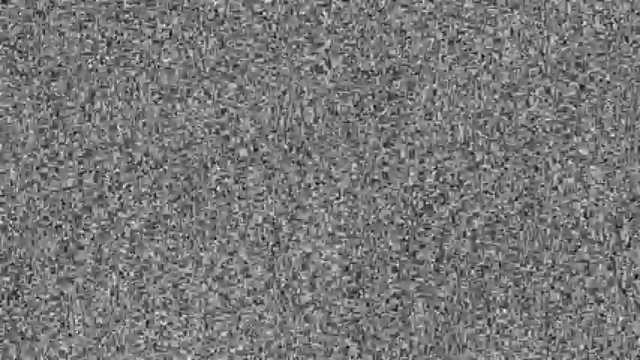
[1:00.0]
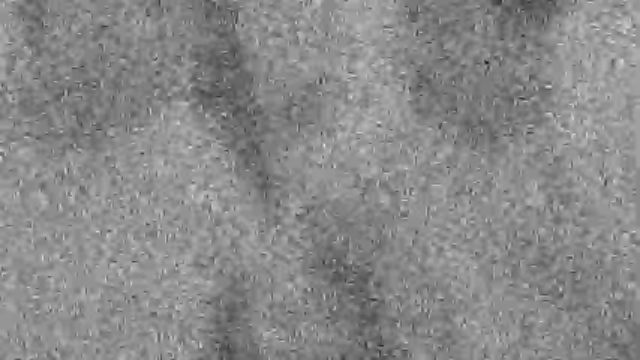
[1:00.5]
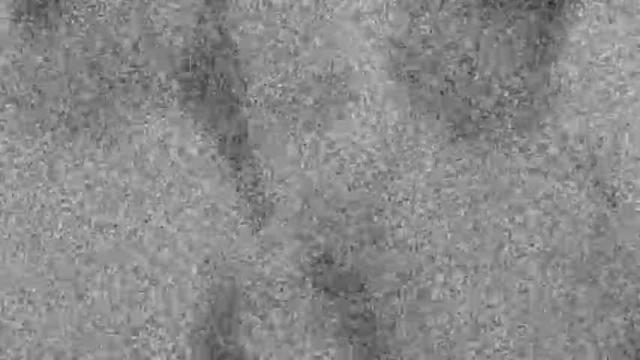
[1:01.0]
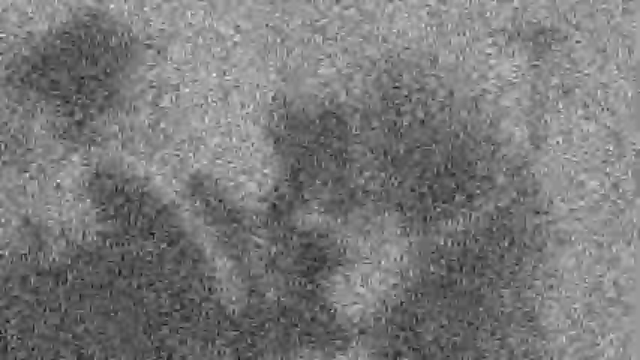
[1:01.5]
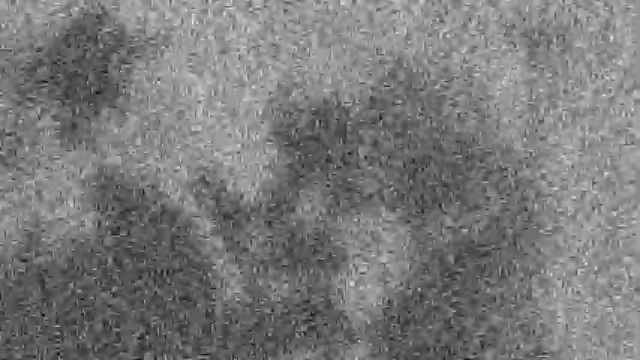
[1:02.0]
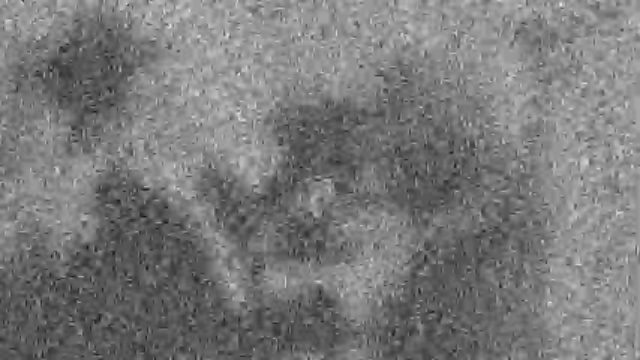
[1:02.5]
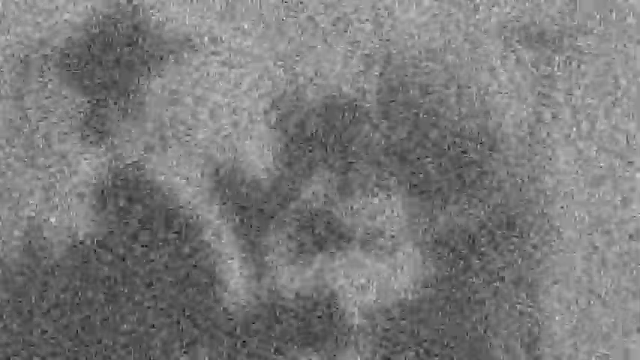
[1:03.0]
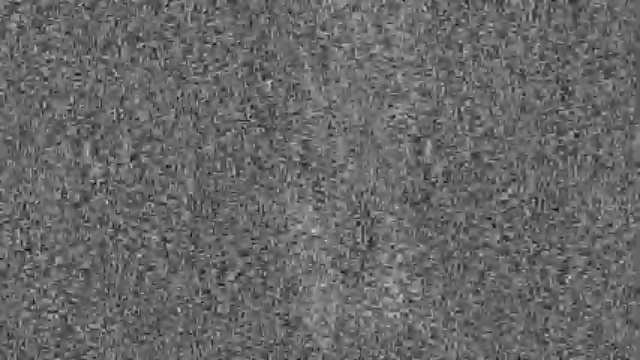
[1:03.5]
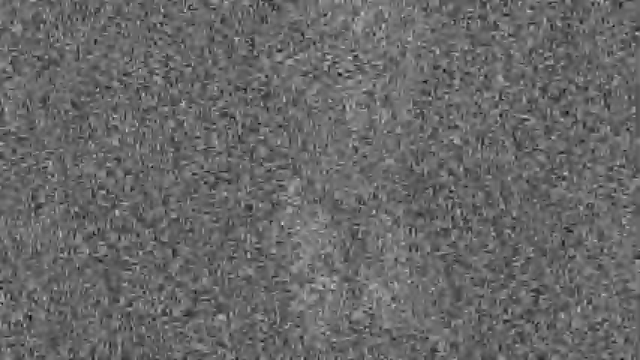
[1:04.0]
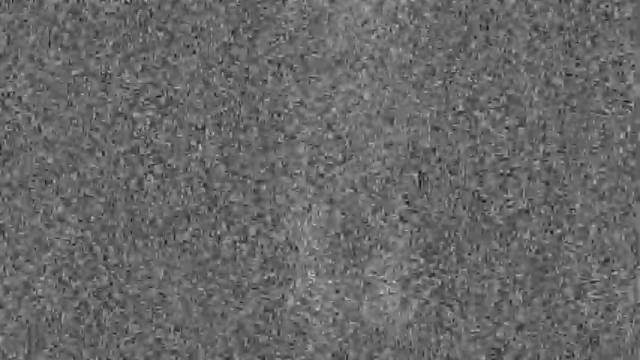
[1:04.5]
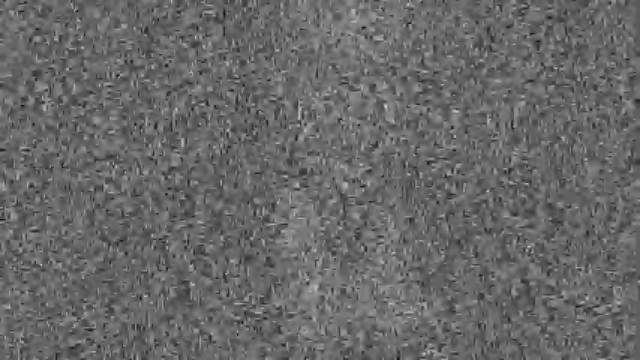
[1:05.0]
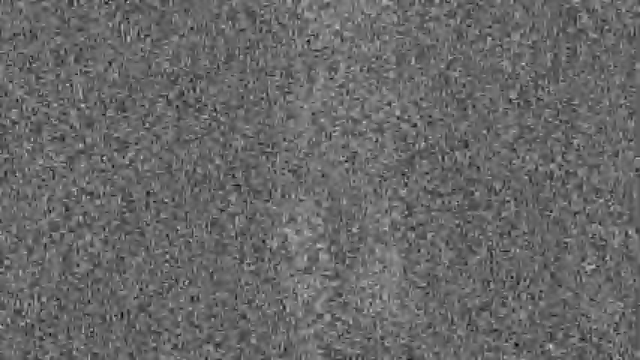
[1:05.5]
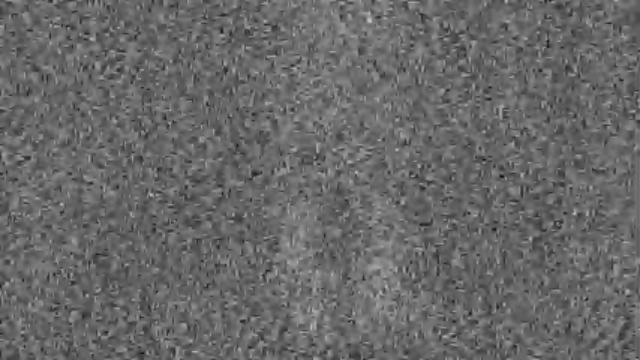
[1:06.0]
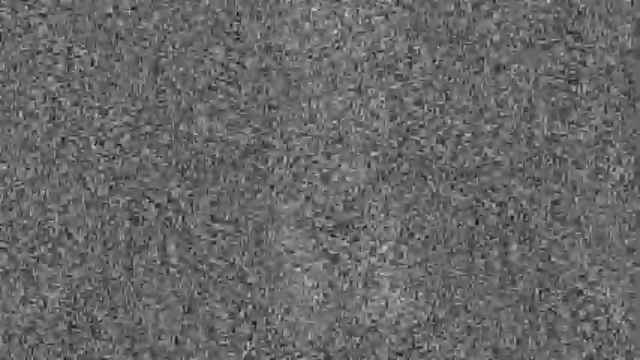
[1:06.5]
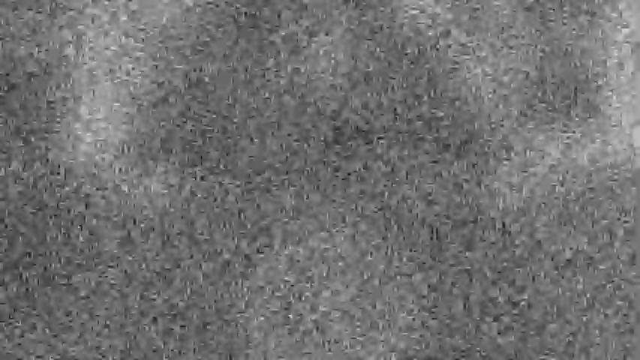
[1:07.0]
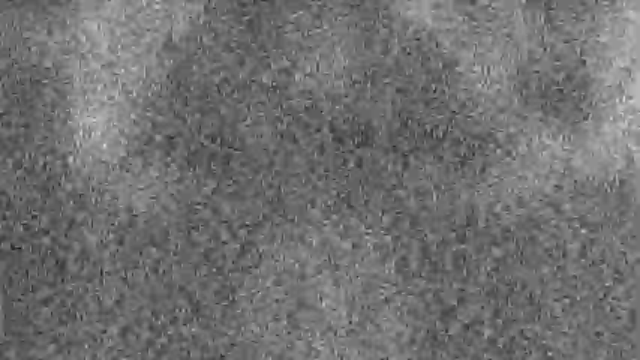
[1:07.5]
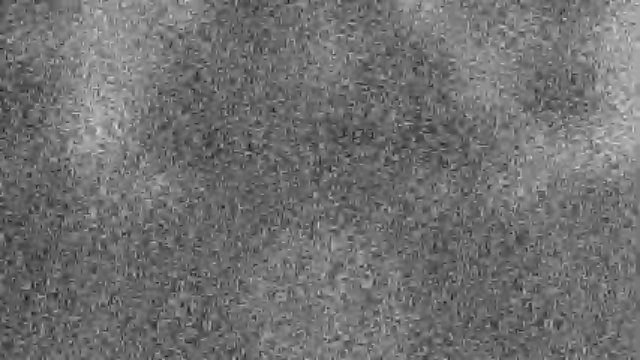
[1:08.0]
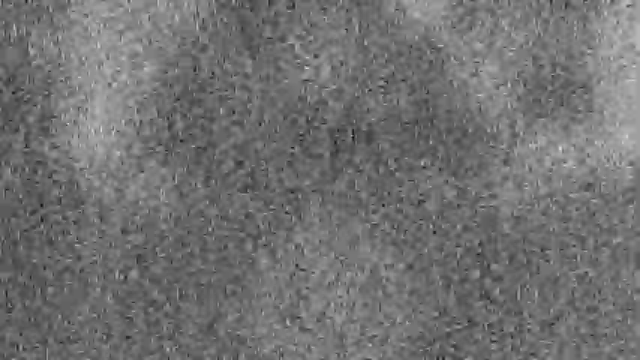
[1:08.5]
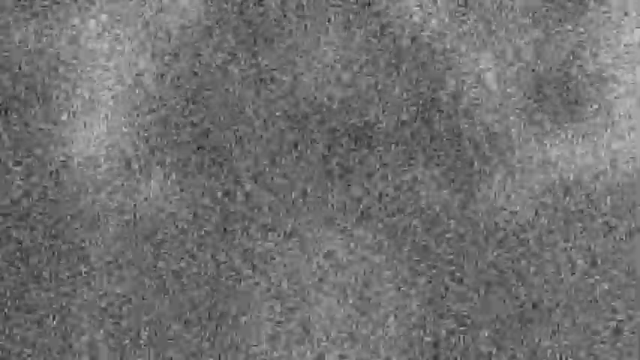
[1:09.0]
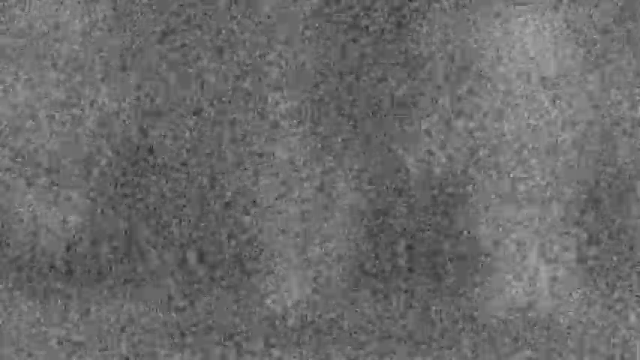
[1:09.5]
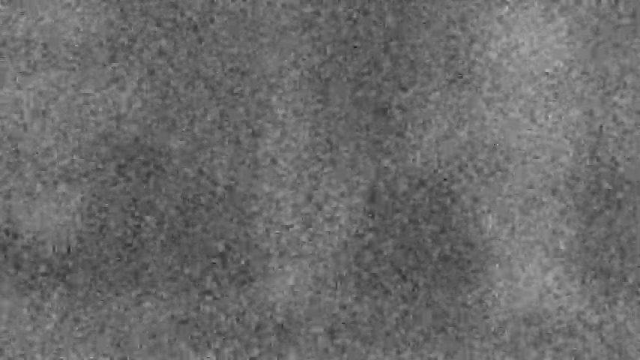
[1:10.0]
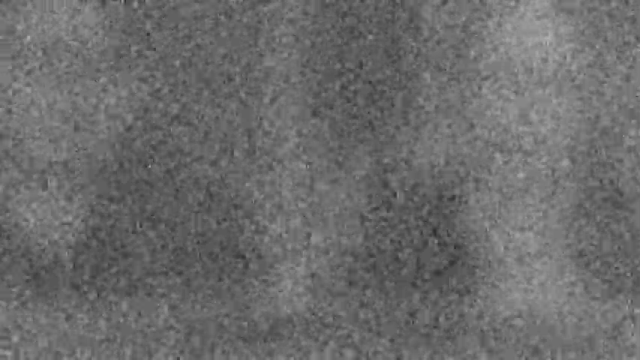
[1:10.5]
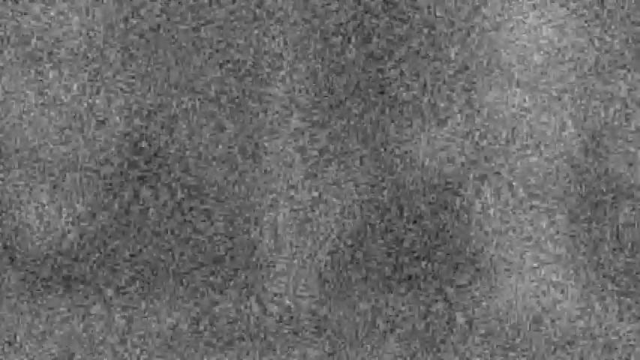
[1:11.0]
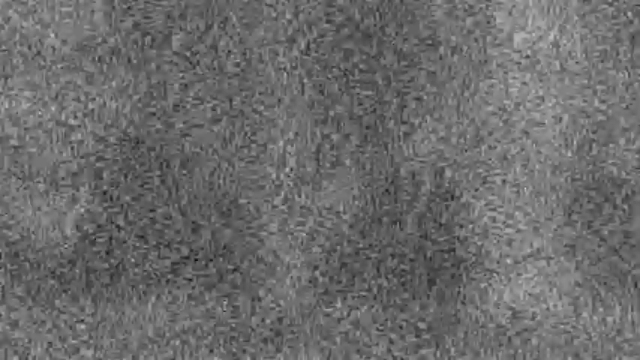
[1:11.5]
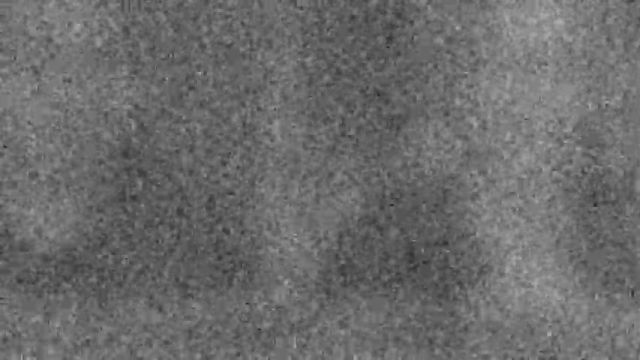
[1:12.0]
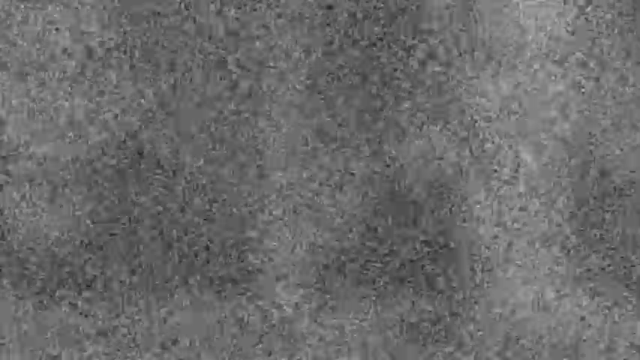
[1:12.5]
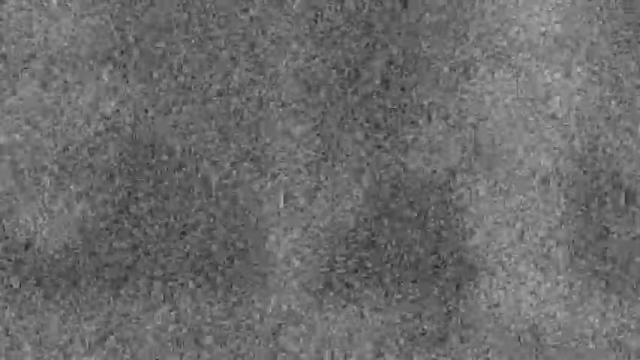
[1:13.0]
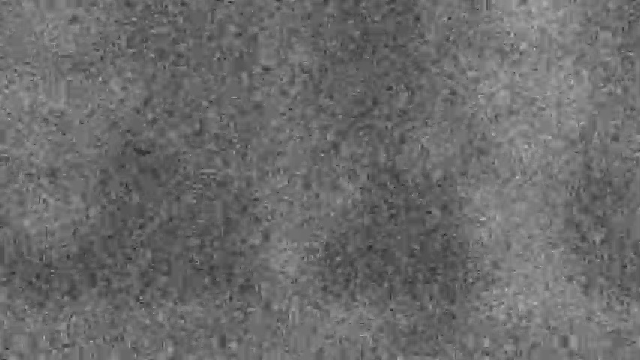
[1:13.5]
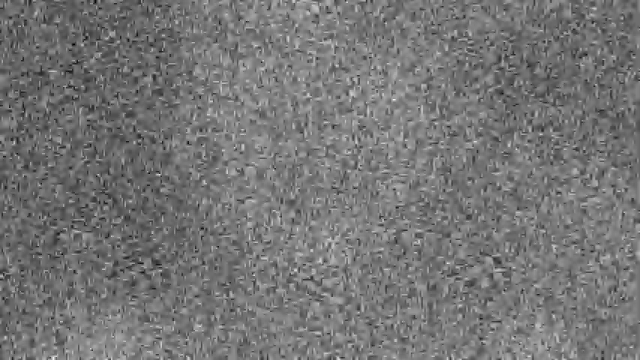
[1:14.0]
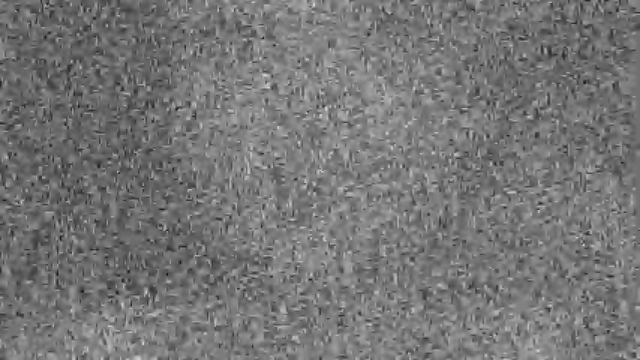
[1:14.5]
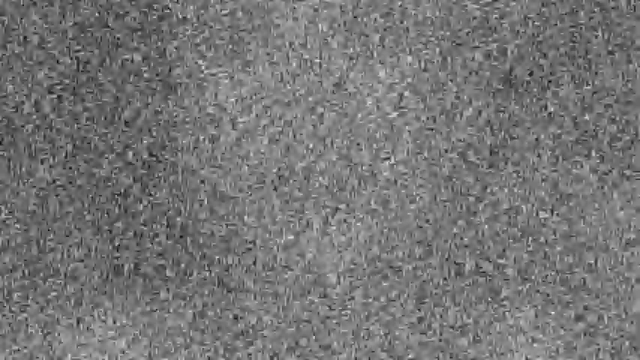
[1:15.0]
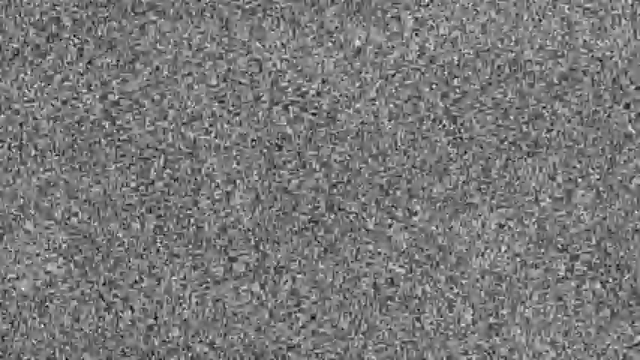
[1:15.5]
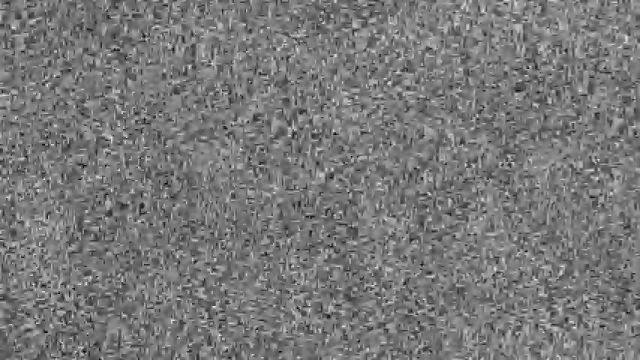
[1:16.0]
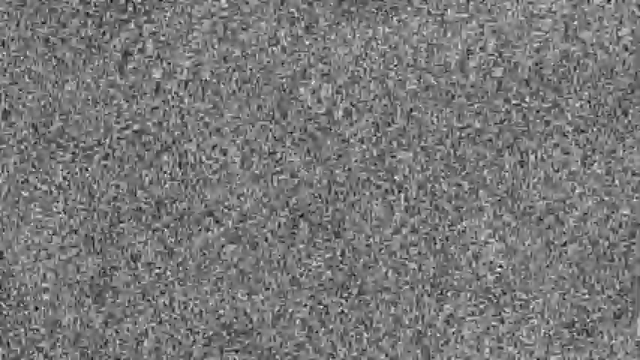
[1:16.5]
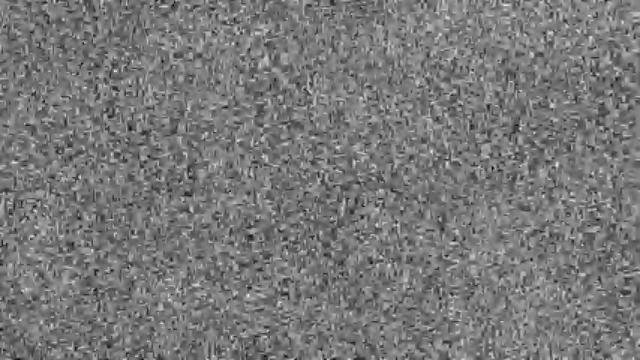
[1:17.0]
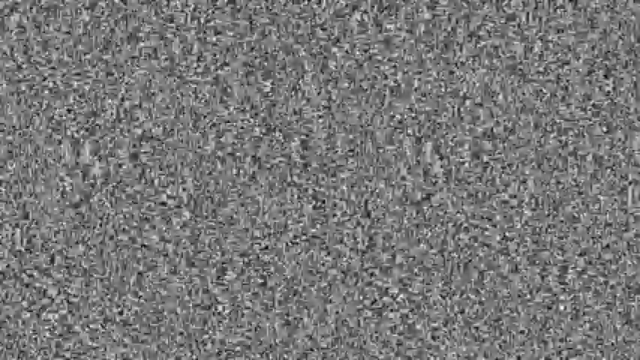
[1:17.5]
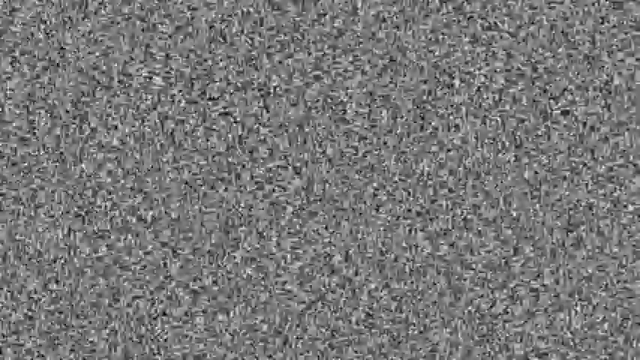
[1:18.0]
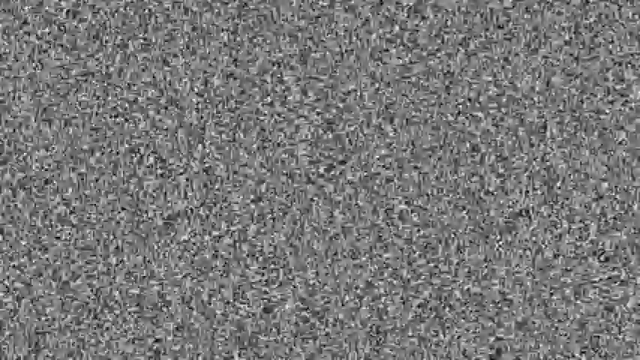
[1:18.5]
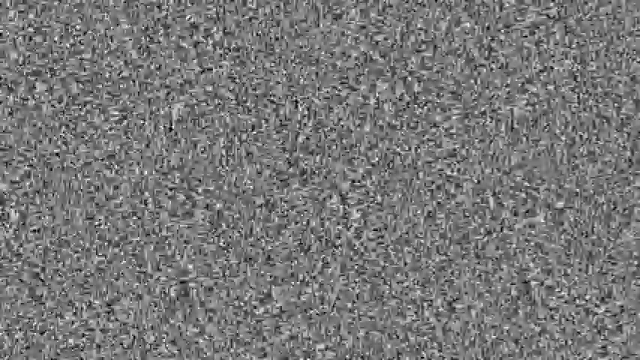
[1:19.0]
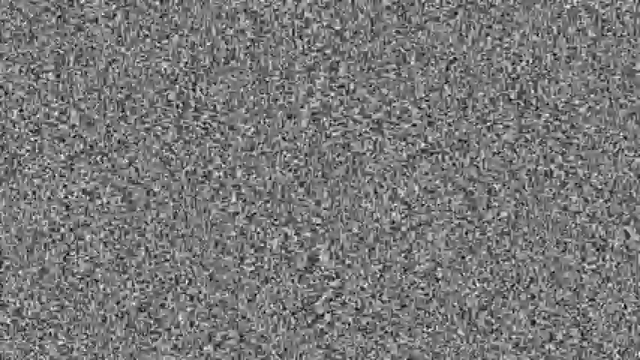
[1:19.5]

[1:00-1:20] Images appear through a mass of static, seemingly from an older model TV showing older programming, all heavily covered in dense static. Certain things can kind of be made out: an image of a person with a top hat, seemingly wearing some type of black tuxedo, and another image that looks like three figures that cannot be made out. The static becomes dense and darker, covering the figures and shapes until they go away. The static starts to stop and then continues, and it lightens again, when the images change into something else, either some type of shadows or some type of objects.